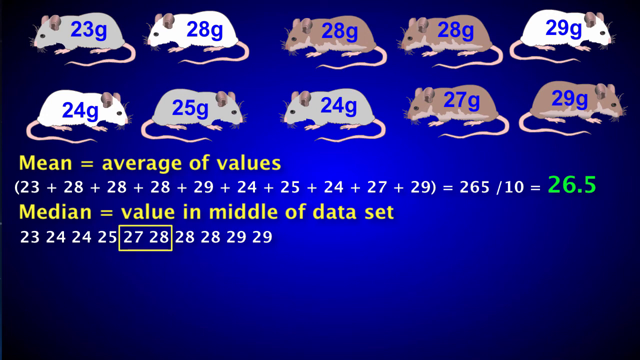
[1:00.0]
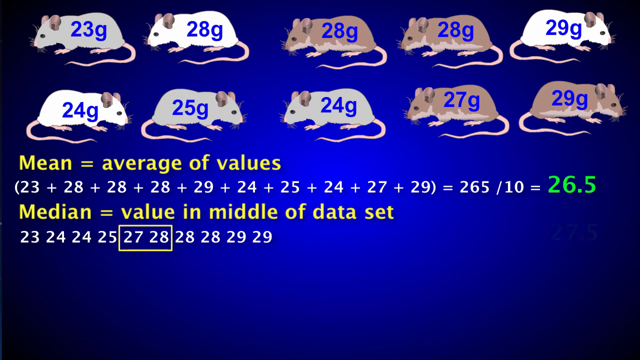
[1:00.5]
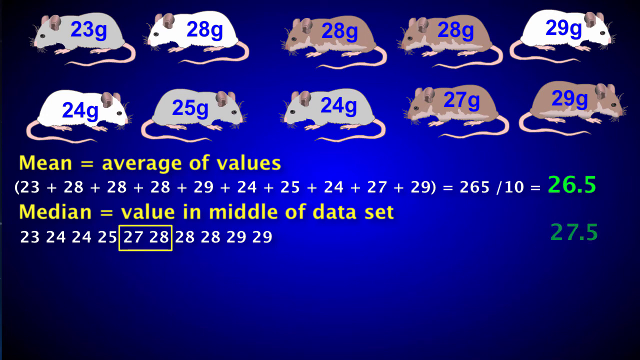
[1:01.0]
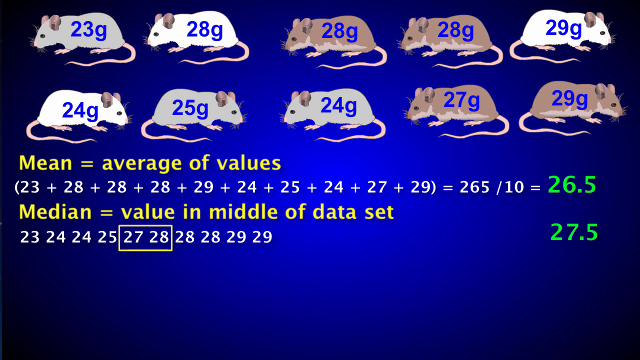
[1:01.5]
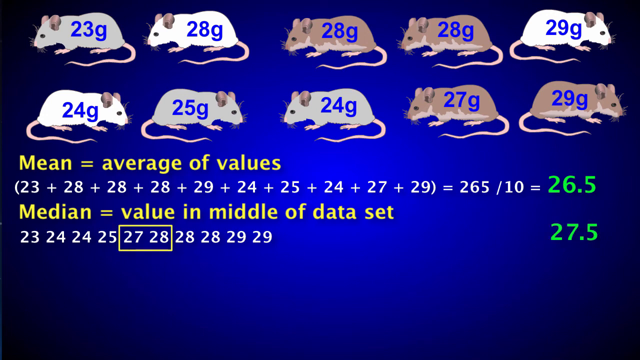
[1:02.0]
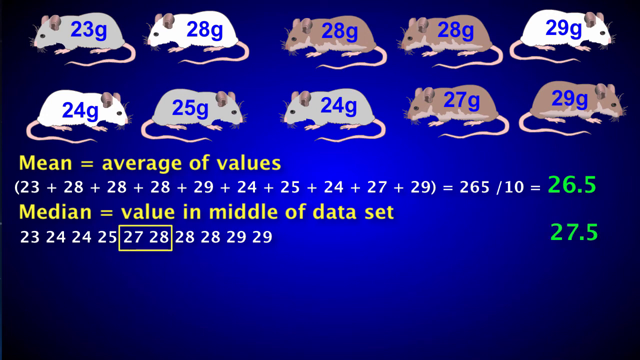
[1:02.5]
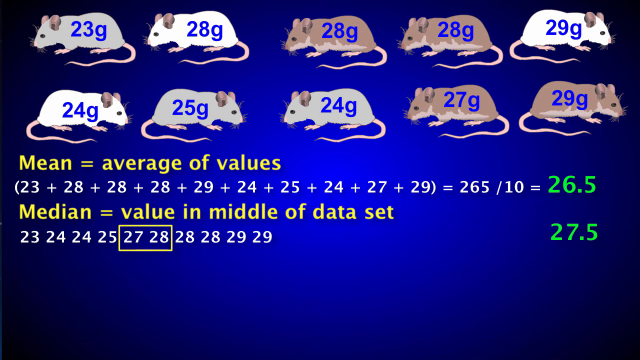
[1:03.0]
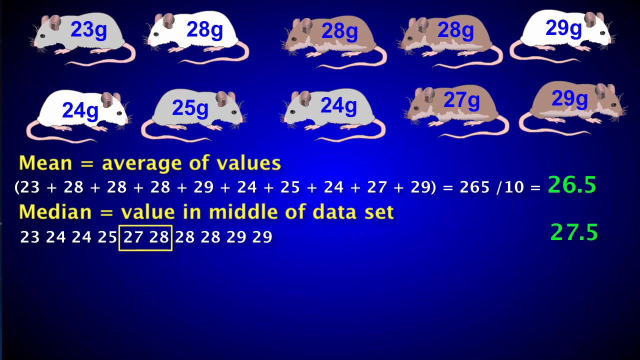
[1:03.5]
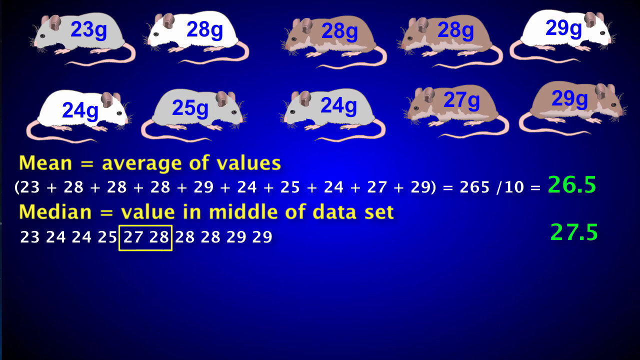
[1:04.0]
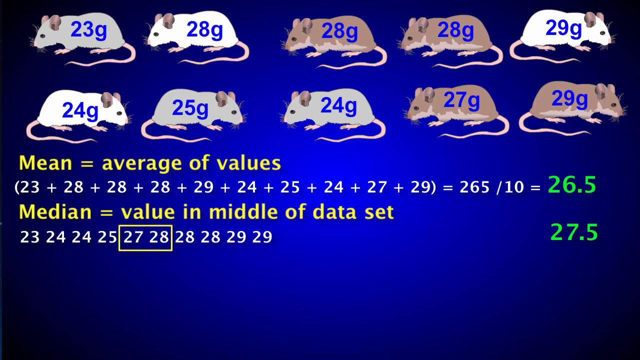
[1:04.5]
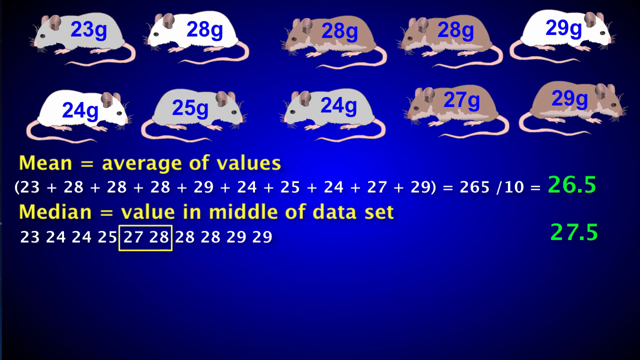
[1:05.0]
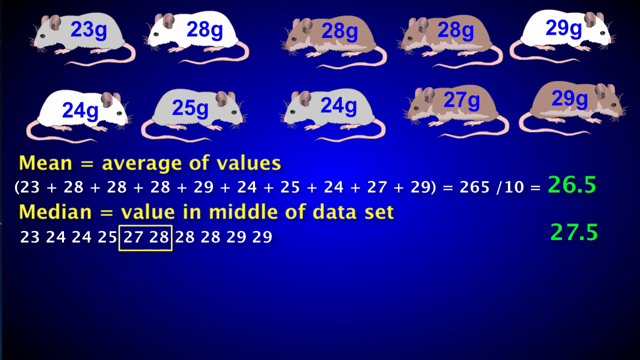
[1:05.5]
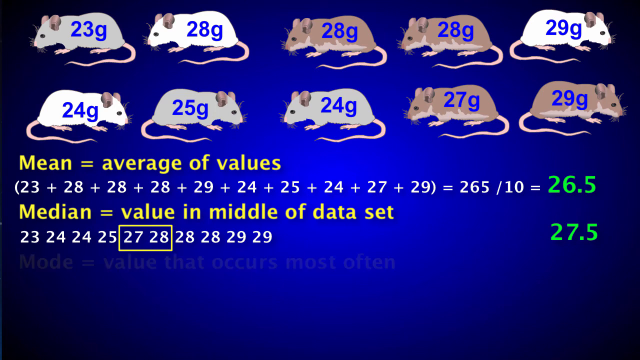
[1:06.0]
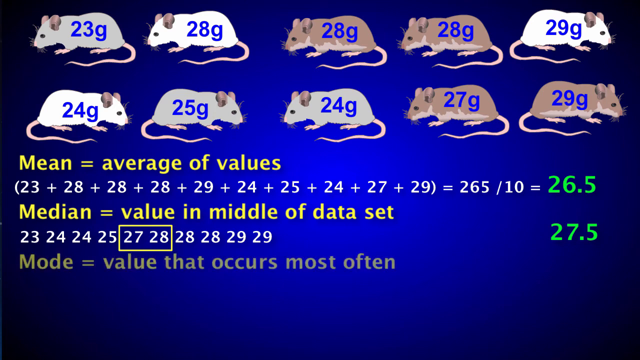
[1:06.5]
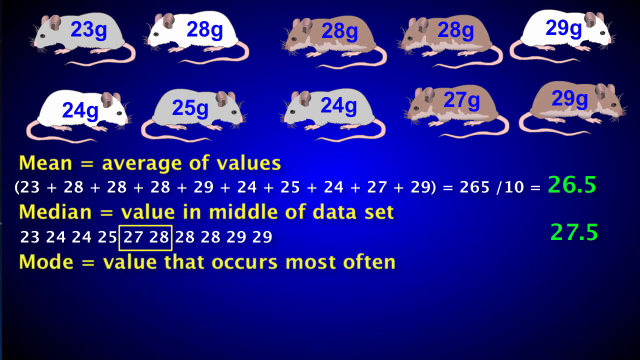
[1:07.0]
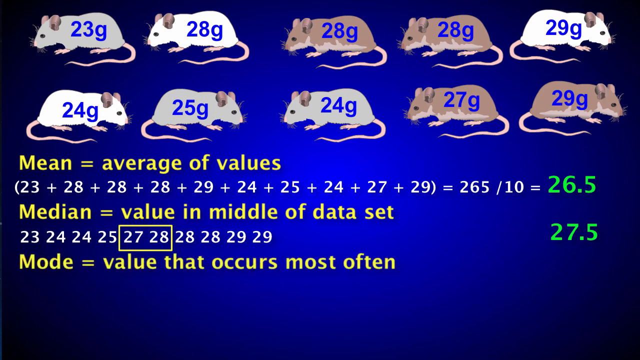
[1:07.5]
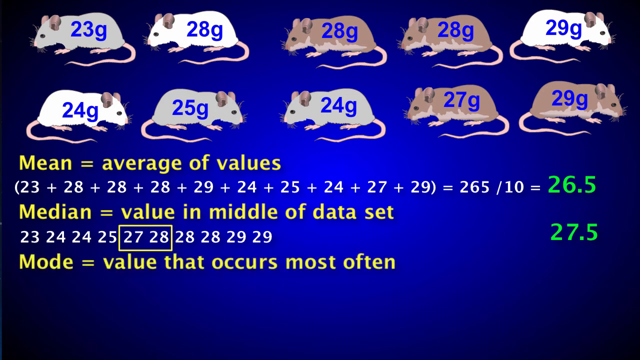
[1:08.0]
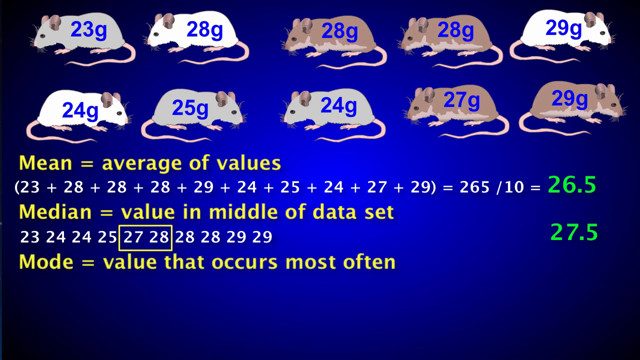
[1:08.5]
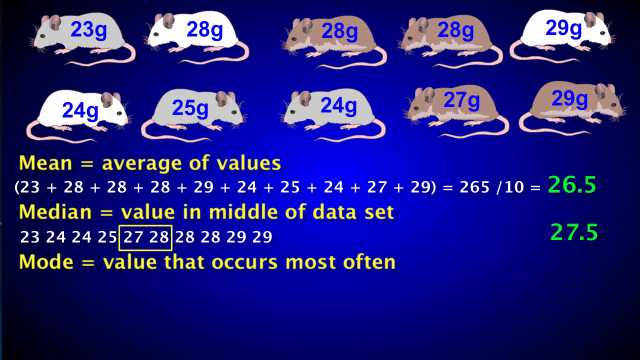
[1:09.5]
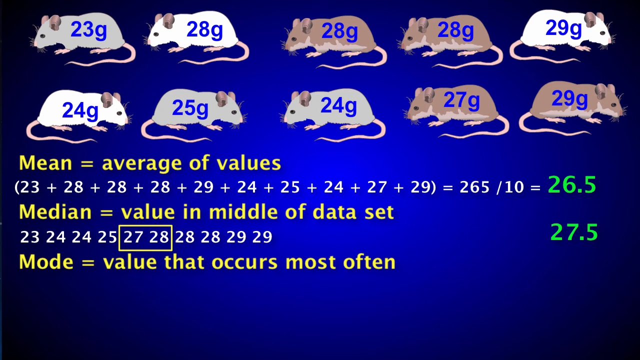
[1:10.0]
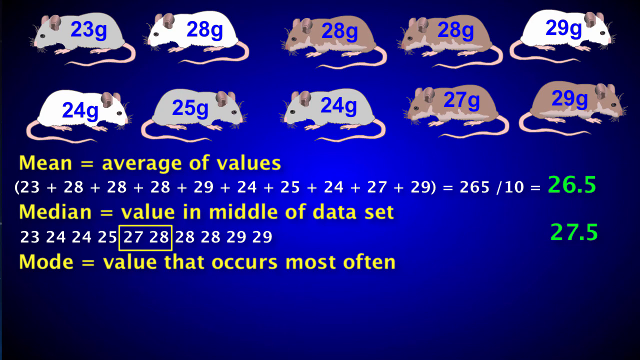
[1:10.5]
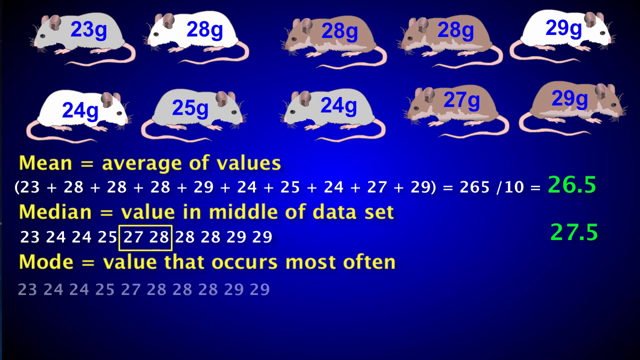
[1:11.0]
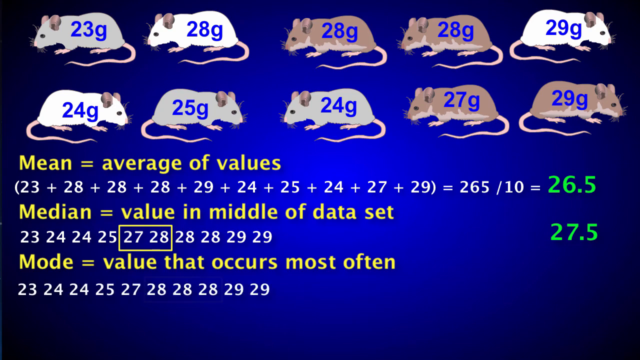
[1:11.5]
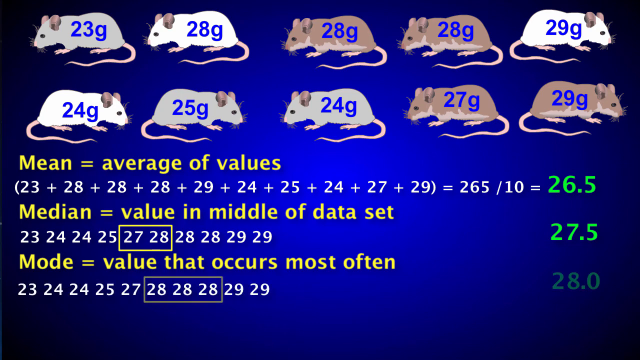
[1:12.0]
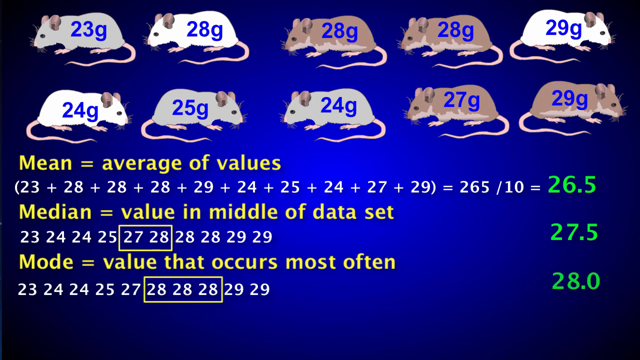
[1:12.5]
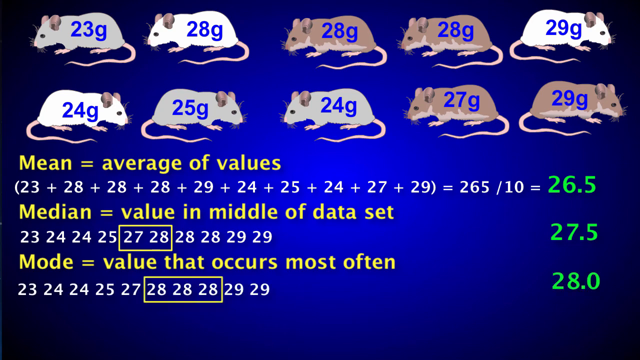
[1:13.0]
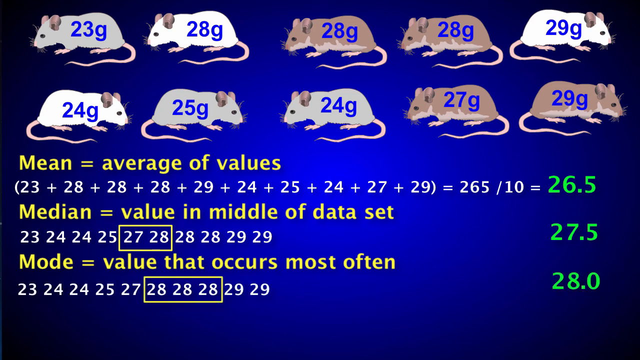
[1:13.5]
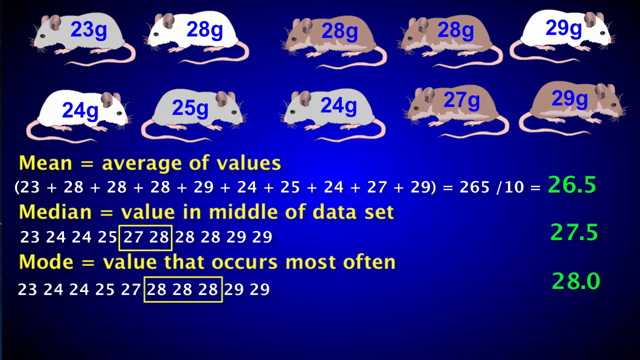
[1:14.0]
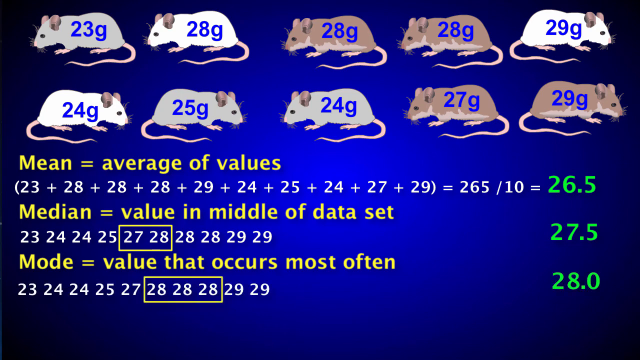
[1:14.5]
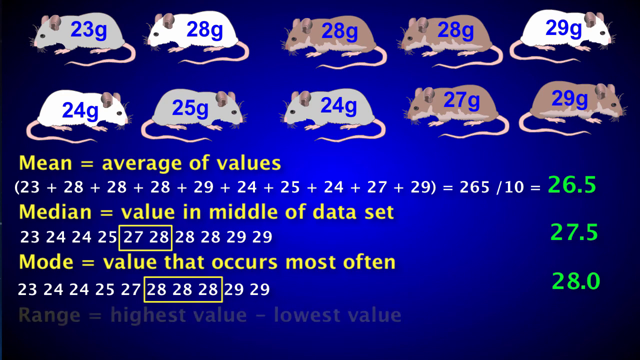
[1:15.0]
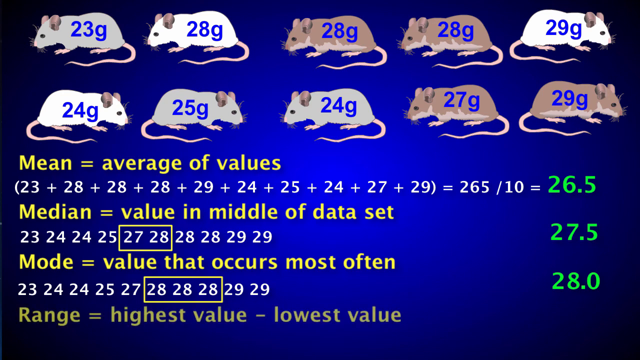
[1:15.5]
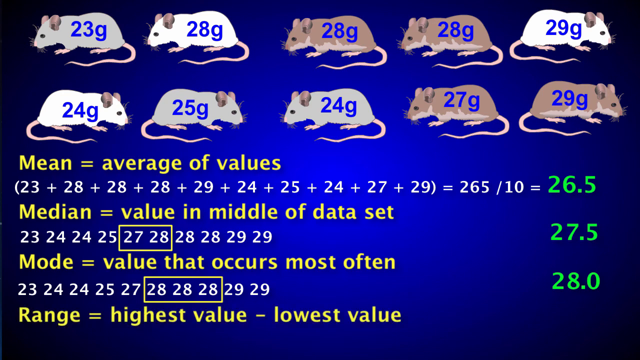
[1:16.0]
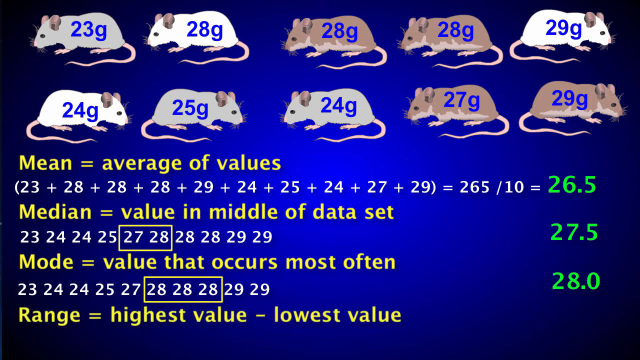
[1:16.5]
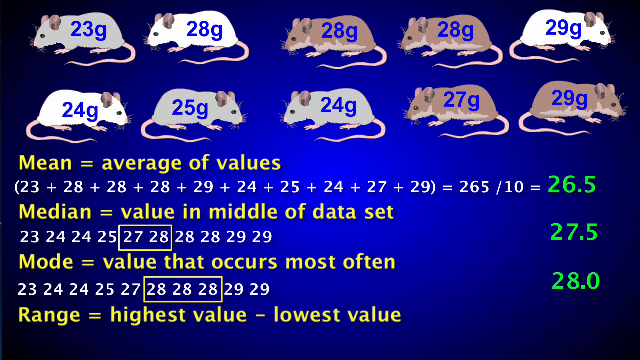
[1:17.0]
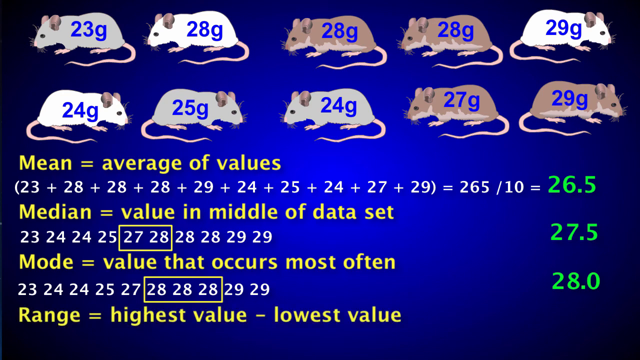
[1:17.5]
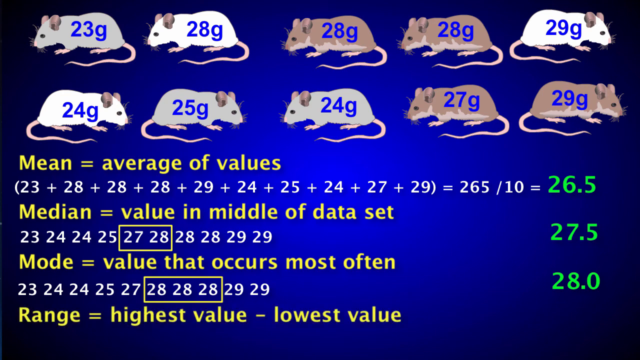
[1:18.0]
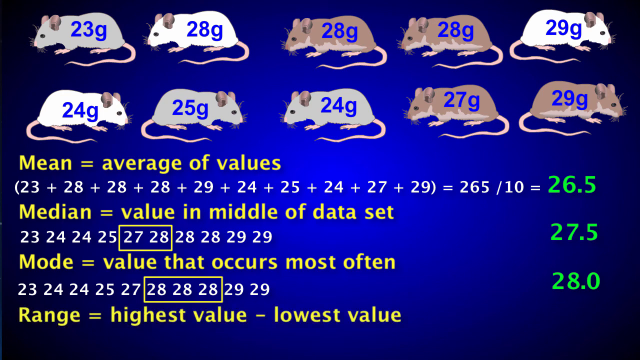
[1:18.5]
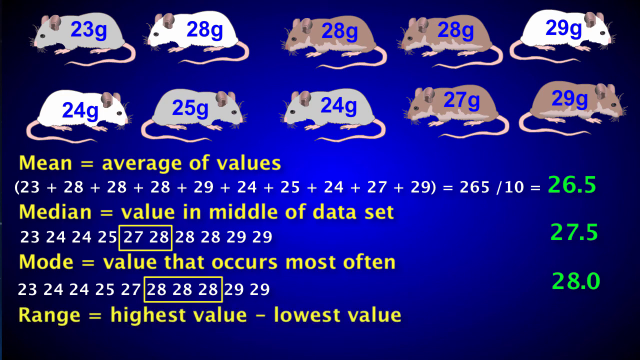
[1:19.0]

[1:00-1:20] The focus is on the median, the value in the middle of the data set, with the numbers 23, 24, 24, 25, 27, 28, 28, 28, 29 and 29. Because there are two numbers in the middle, 27 and 28, the answer is the value directly between them, 27.5. Next comes the definition of mode, the value that occurs most often, which here is 28 because it occurs three times. The range is then defined as the highest value minus the lowest value; here the highest number is 29 and the lowest is 23.